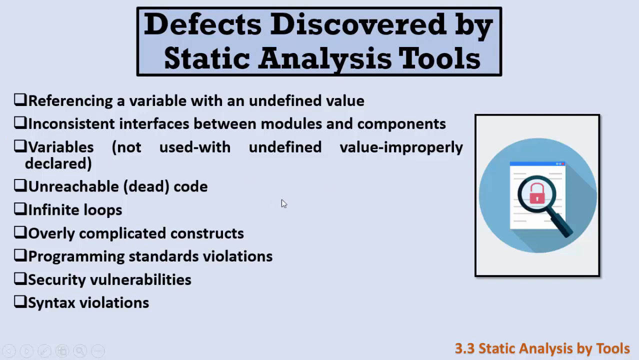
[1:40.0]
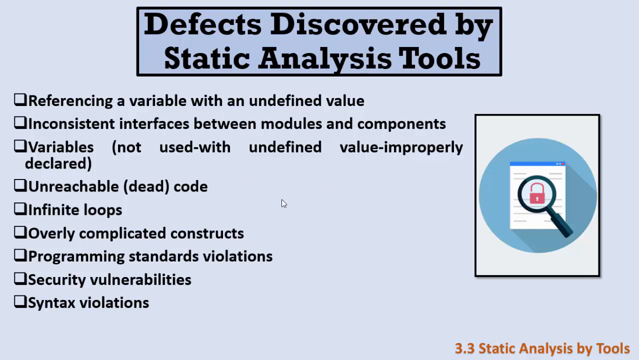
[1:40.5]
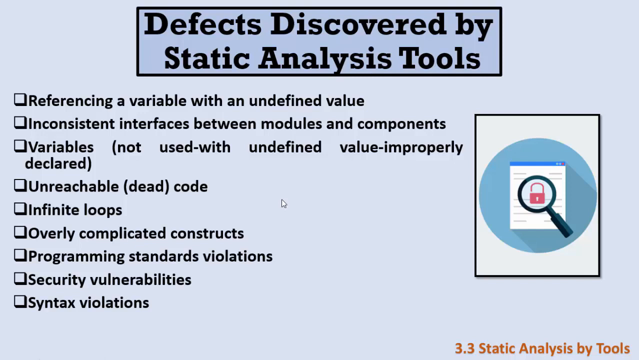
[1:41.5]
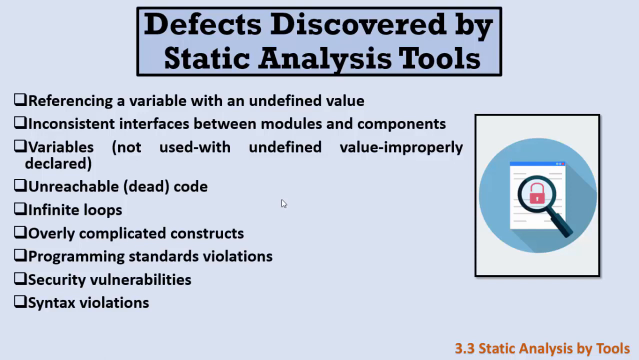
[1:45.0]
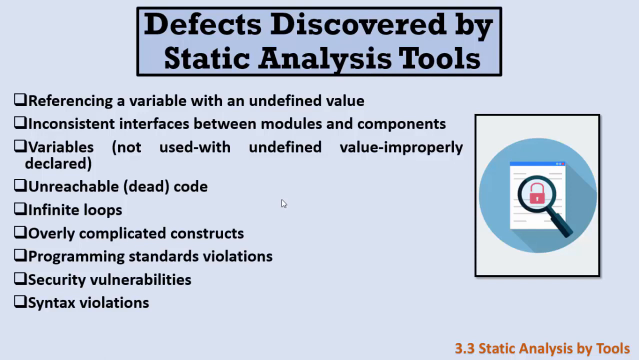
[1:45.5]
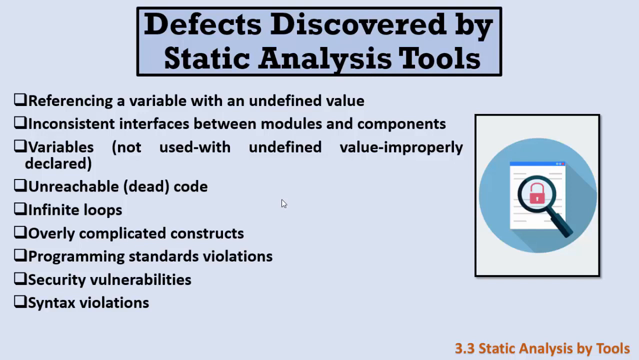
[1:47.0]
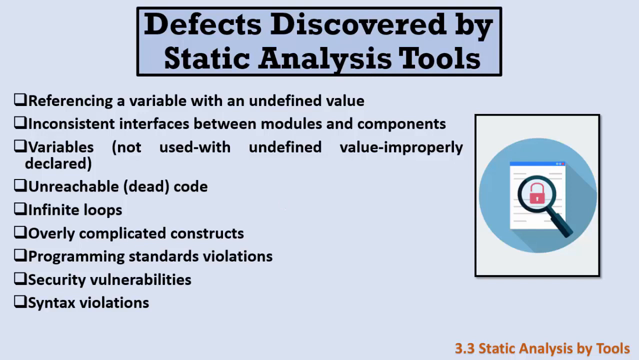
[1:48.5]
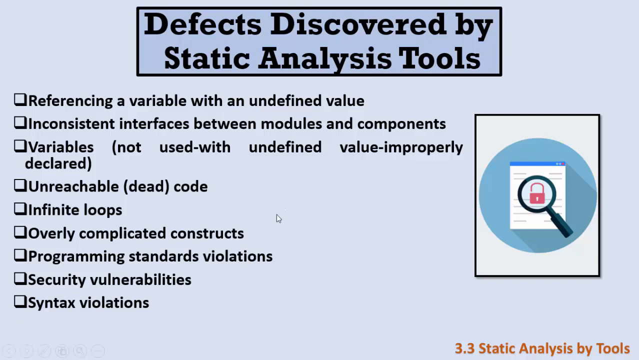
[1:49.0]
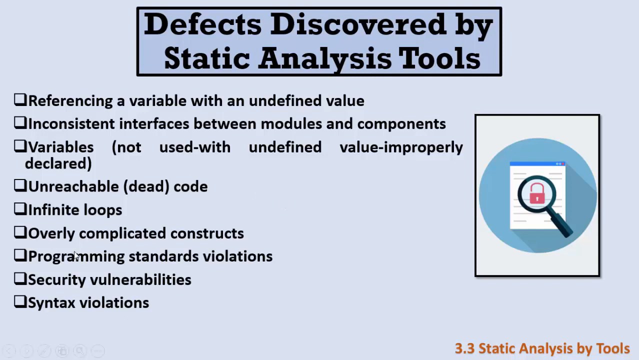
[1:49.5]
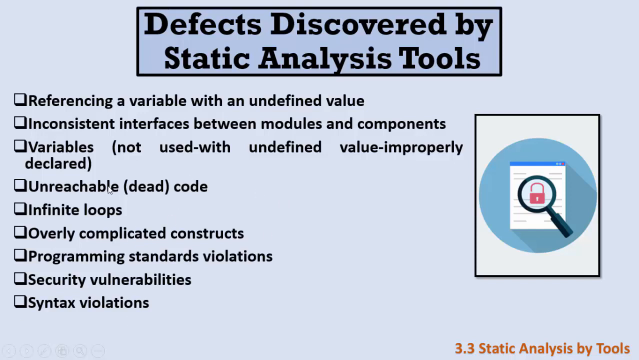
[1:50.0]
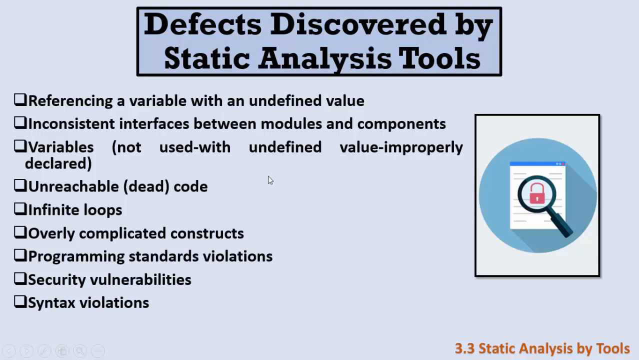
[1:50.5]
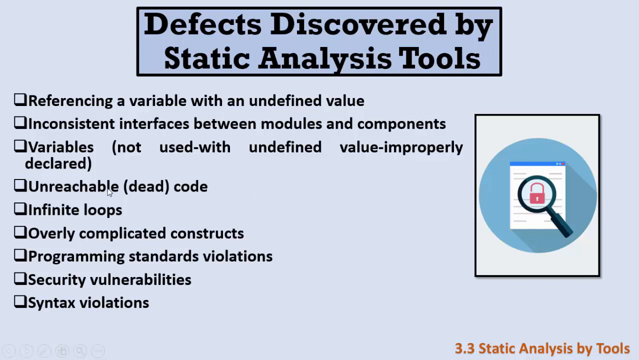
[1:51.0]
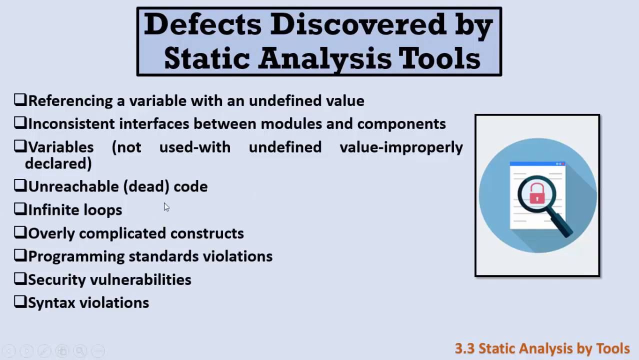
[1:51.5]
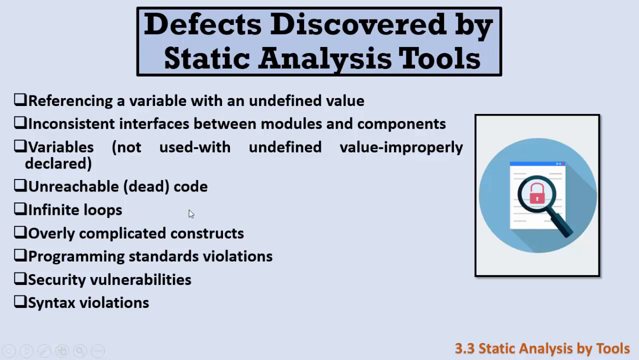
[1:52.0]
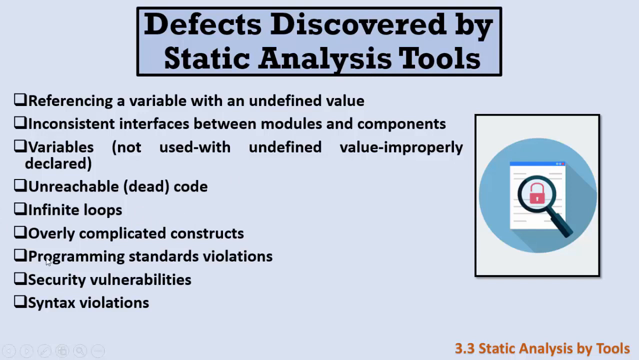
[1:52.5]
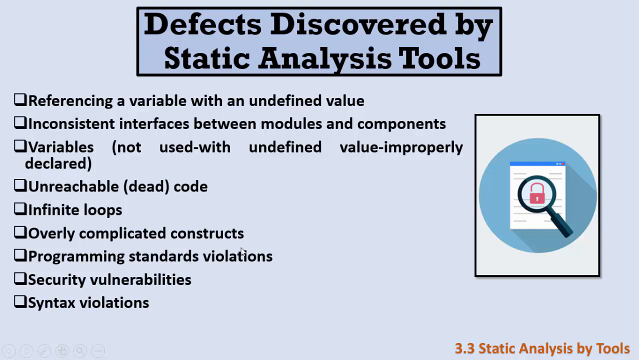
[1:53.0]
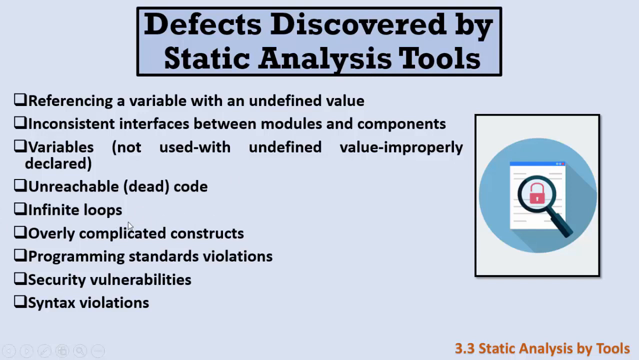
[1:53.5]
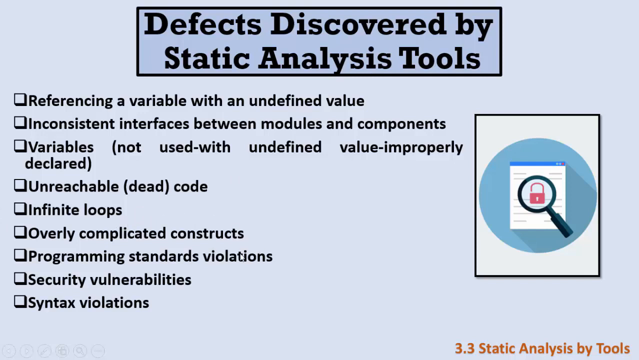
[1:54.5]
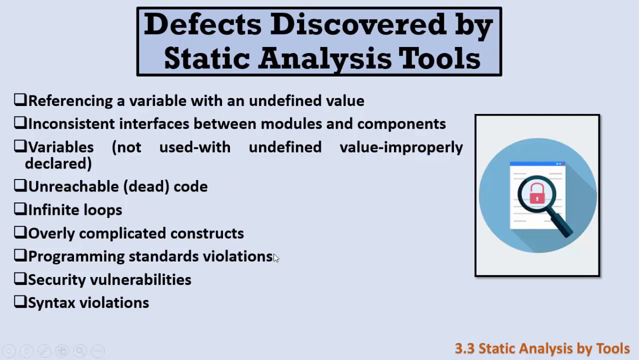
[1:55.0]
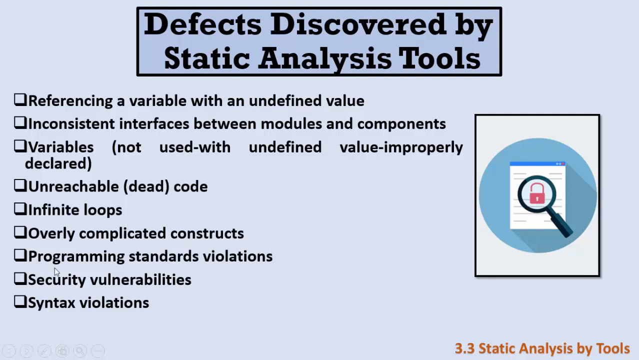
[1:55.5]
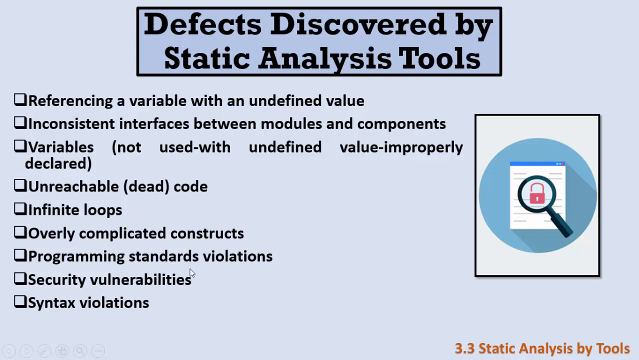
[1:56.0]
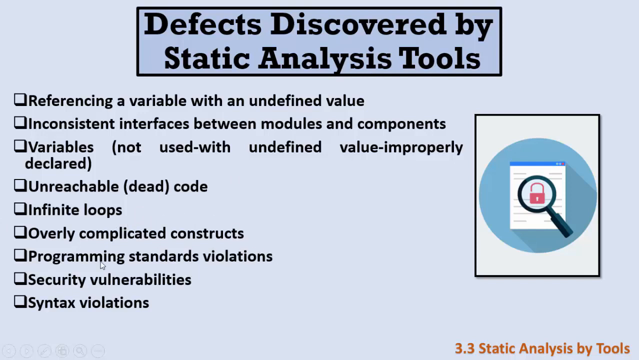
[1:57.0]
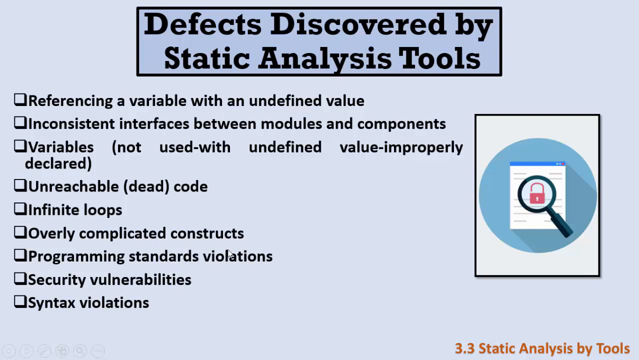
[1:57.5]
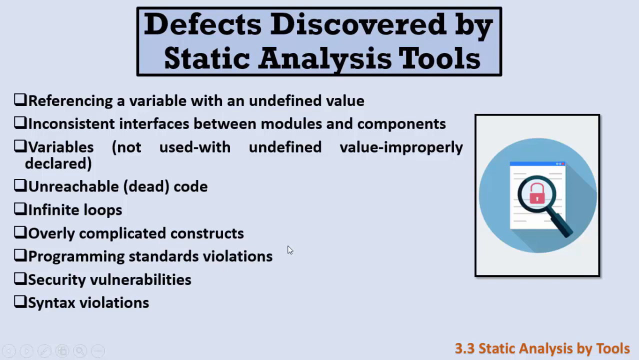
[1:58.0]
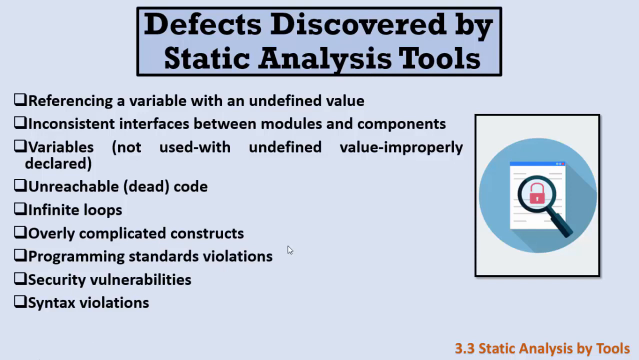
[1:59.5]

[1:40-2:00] The page titled "Defects Discovered by Static Analysis Tools" is still shown. The cursor moves rapidly in a circular motion around the screen, as though the person making the video is enthusiastically or emphatically circling or underlining parts of the text as they talk about them. On the right is still the icon of a magnifying glass looking at a pink padlock on the screen of an electronic device; the device is inside a blue circle, which is inside a vertical white rectangle. The list on the left has nine items, not numbered, each with a square like a checkbox to its left, and the text is unchanged. In the lower right-hand corner, orange text still reads "3.3 Static Analysis by Tools", which seems to be the title of the video.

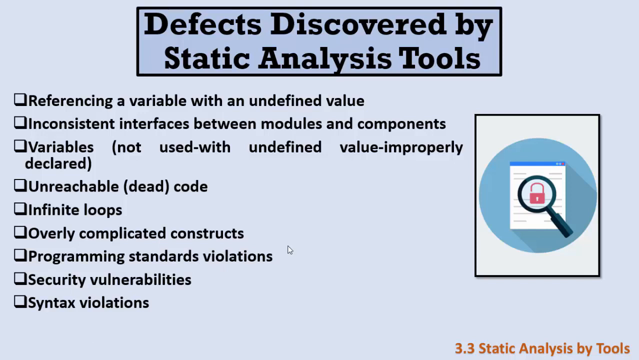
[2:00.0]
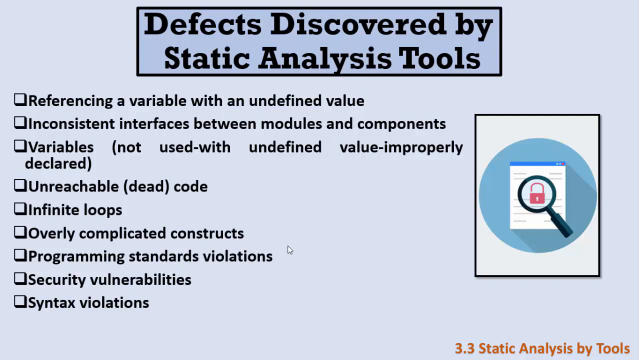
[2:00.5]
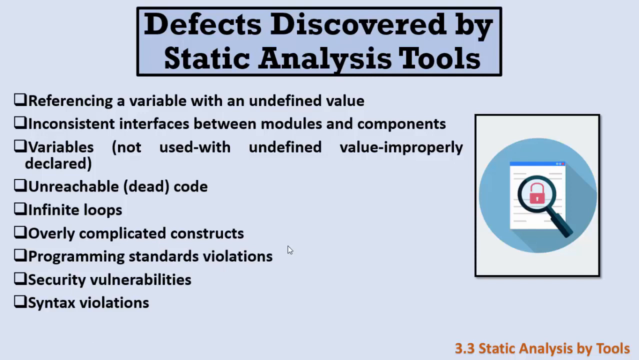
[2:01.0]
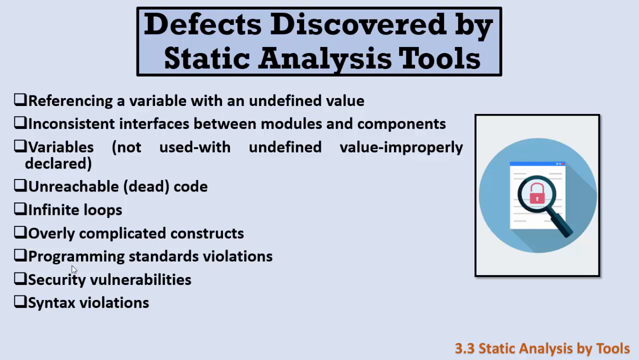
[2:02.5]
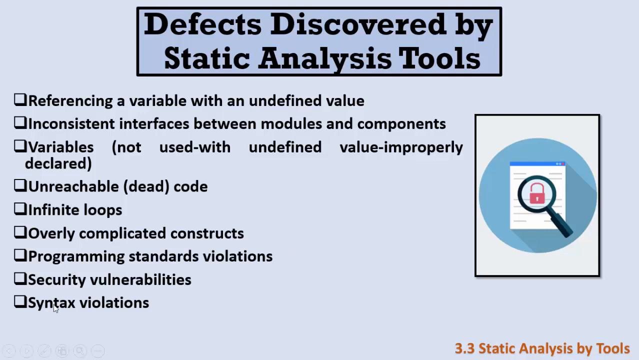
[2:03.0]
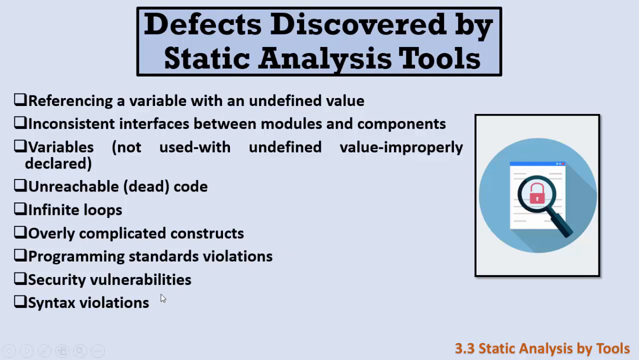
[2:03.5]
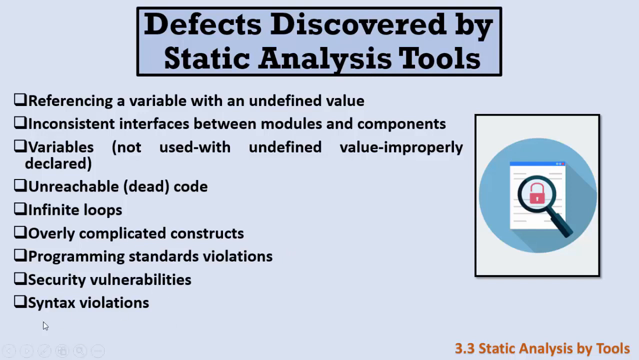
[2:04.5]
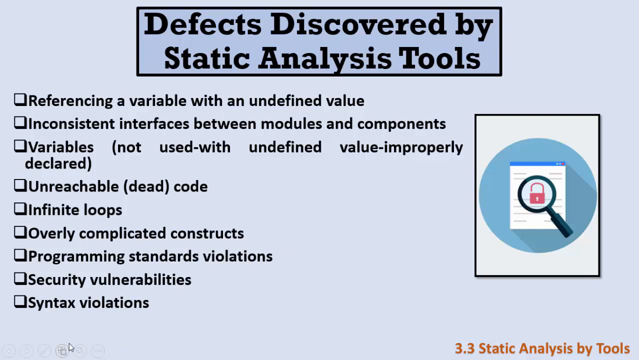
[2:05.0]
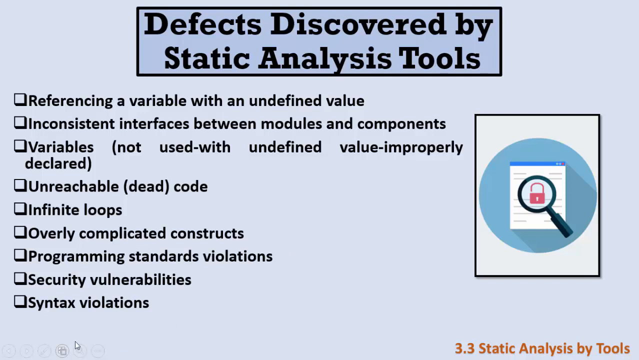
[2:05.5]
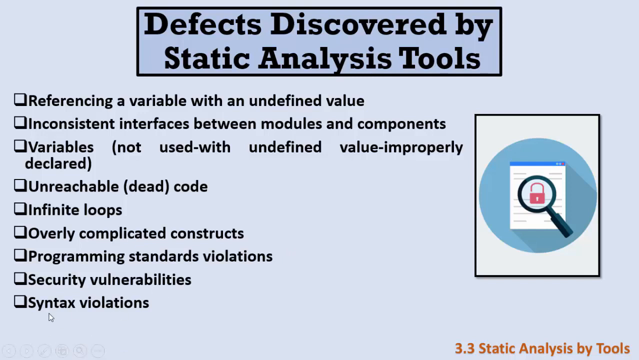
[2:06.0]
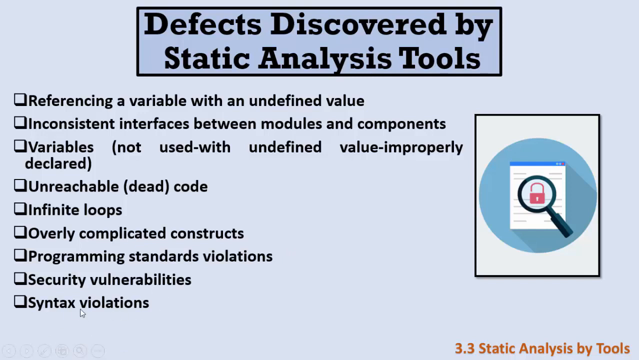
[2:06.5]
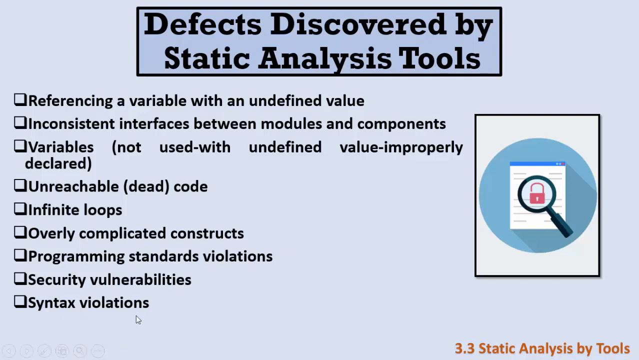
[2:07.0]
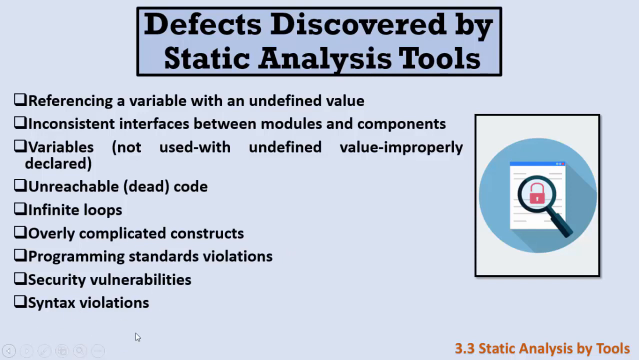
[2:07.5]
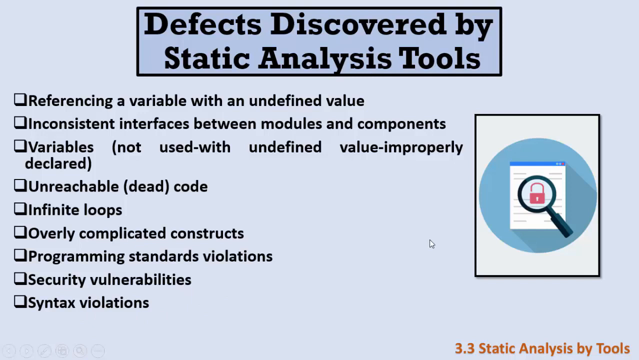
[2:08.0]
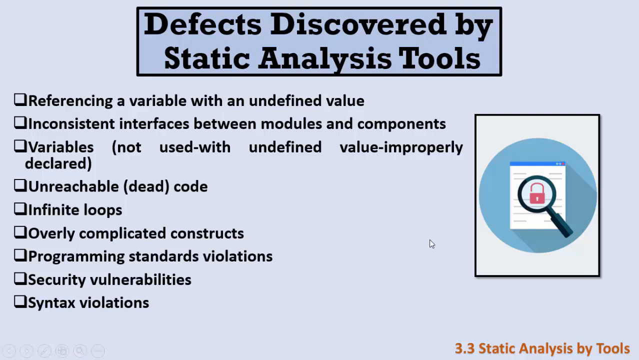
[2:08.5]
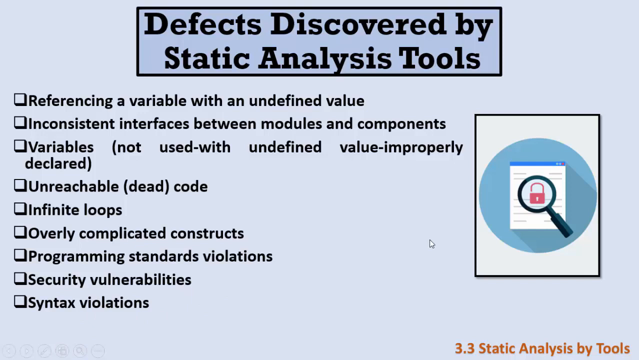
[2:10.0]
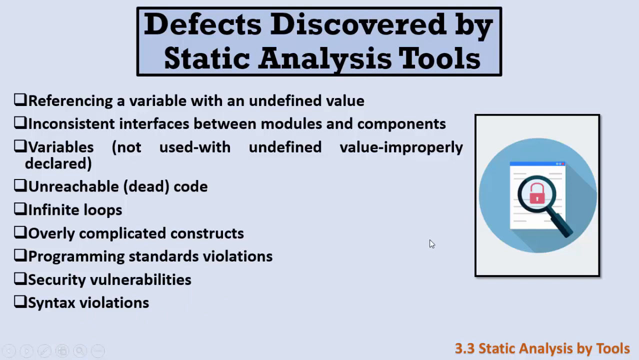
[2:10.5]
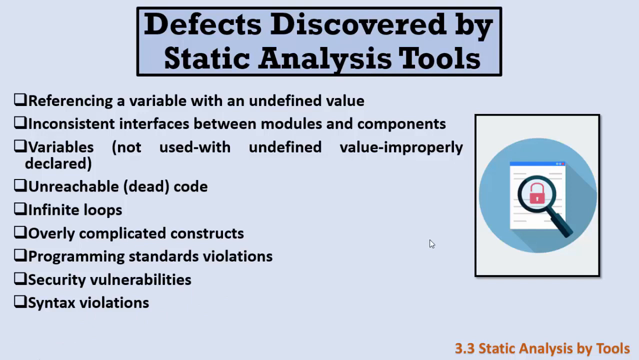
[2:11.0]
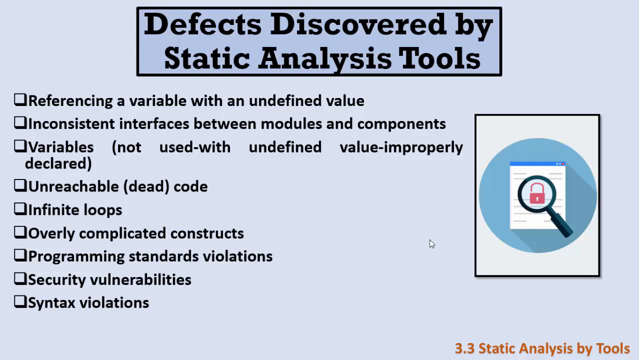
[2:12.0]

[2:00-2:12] The title remains "Defects Discovered by Static Analysis Tools", set inside a slightly darker blue rectangle at the top of the screen. The same list of nine items is displayed on the left two-thirds of the screen; the items are not numbered, but each has an empty black square to its left that looks like a checkbox. On the far right is still an illustration of a magnifying glass looking at a pink padlock superimposed over the screen of a device, which appears inside a blue circle inside a white rectangle.